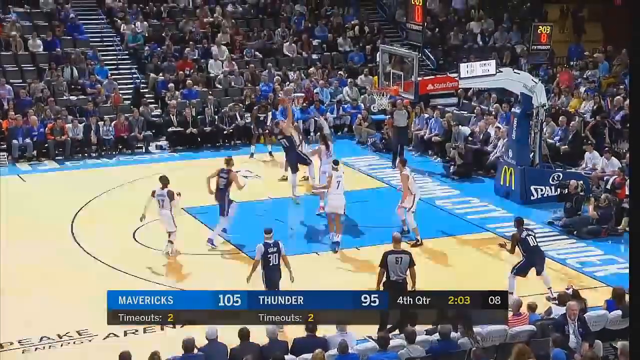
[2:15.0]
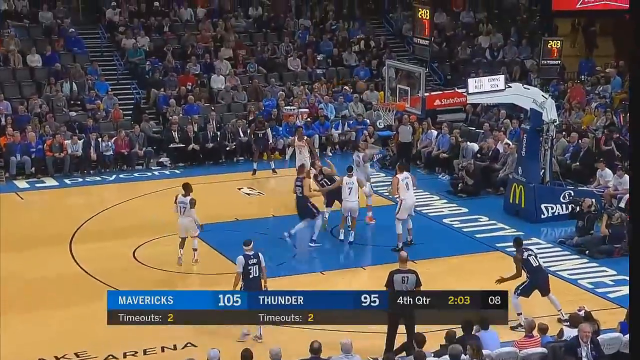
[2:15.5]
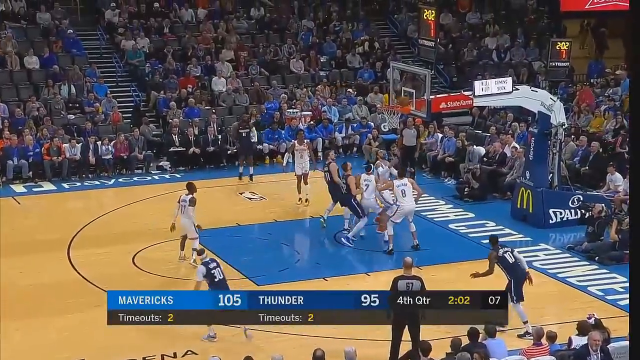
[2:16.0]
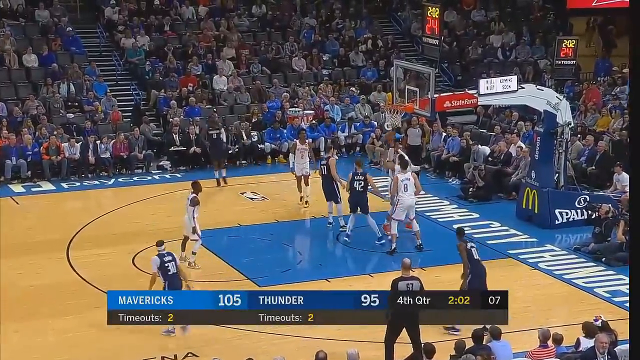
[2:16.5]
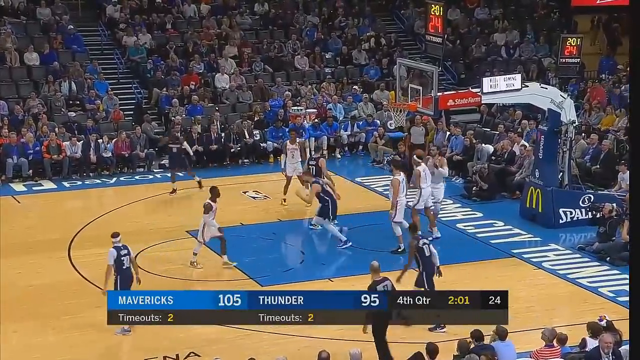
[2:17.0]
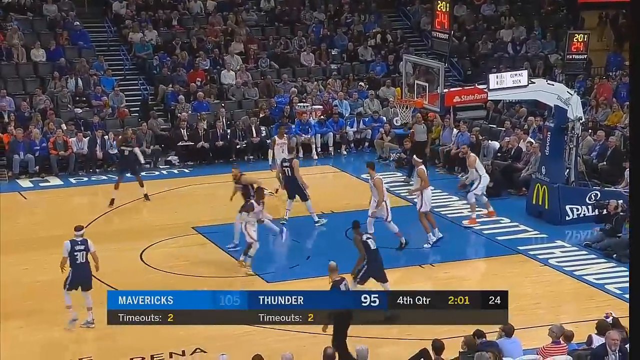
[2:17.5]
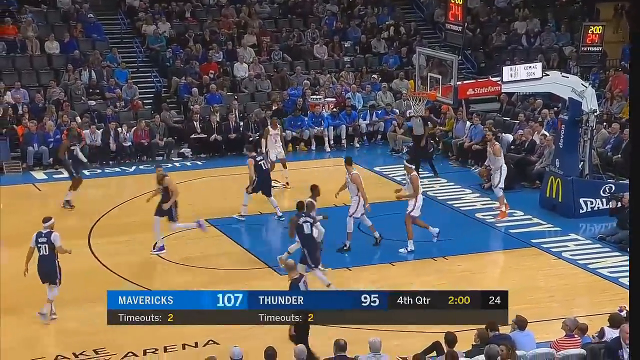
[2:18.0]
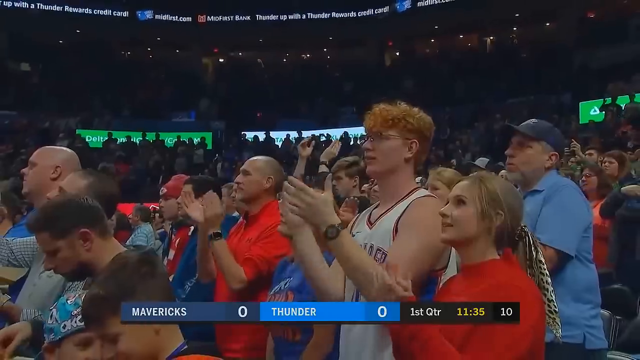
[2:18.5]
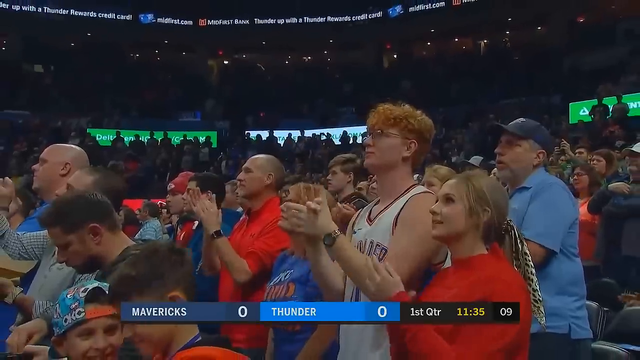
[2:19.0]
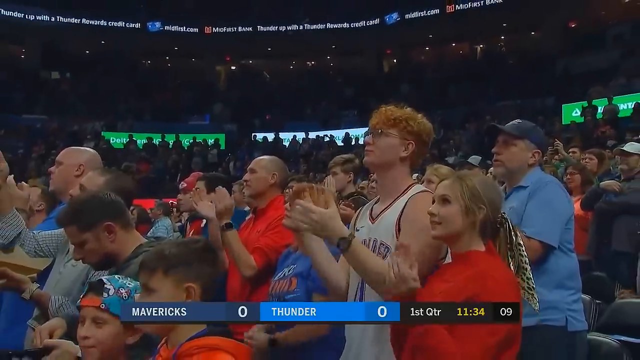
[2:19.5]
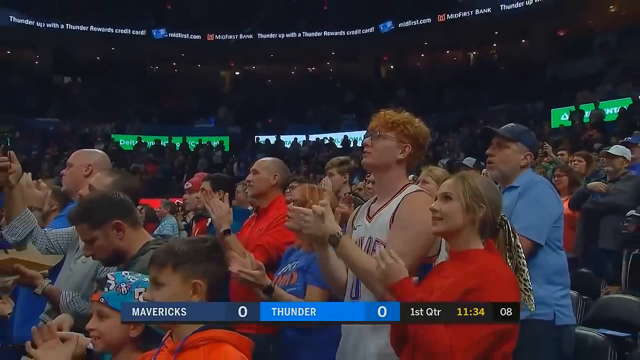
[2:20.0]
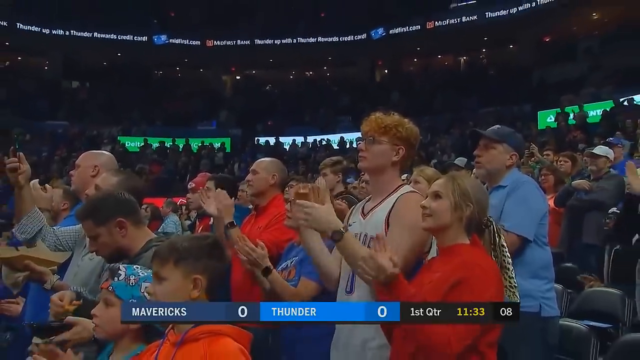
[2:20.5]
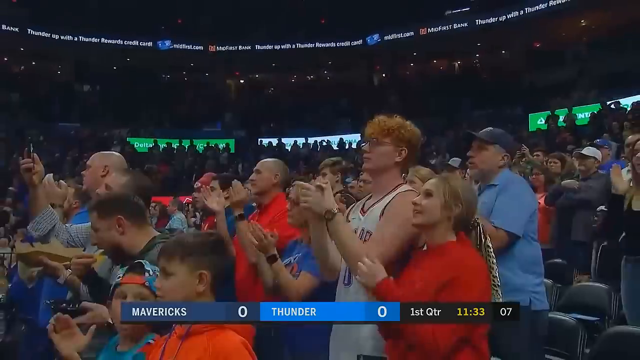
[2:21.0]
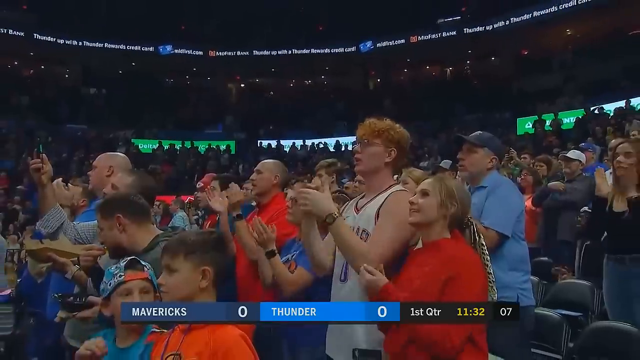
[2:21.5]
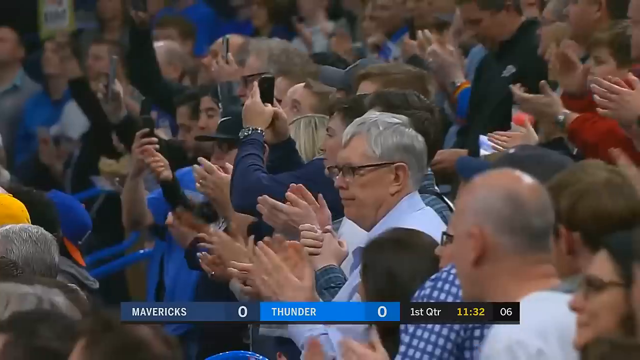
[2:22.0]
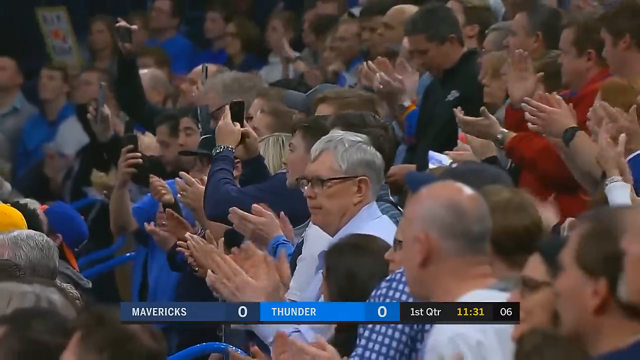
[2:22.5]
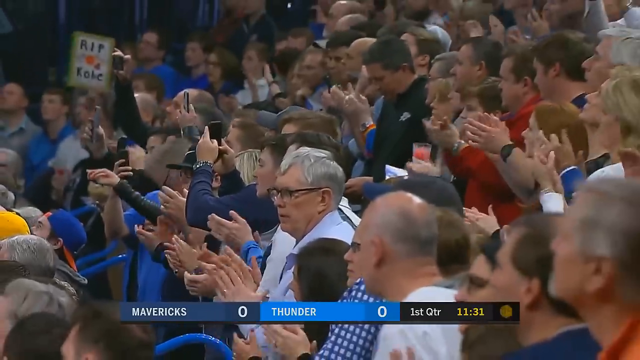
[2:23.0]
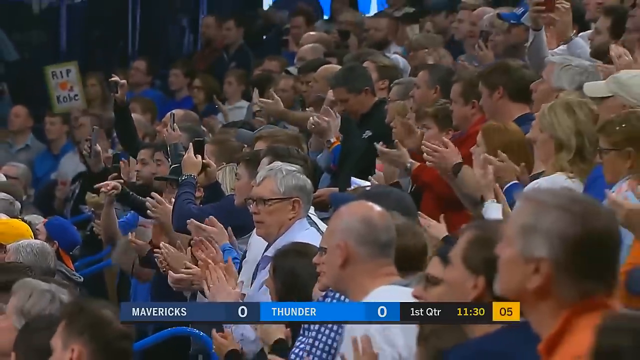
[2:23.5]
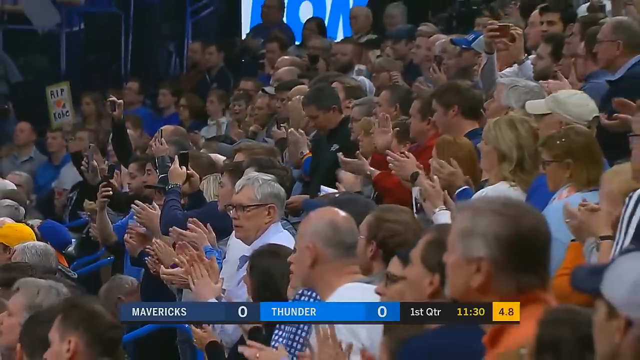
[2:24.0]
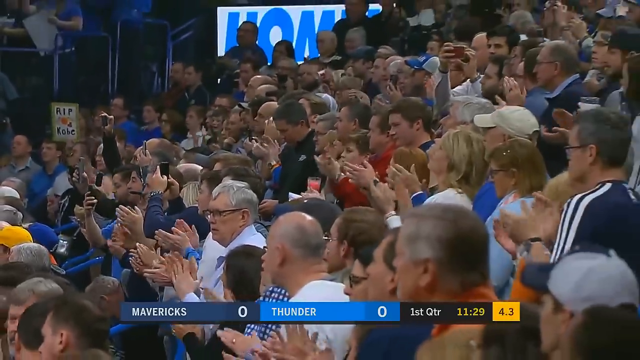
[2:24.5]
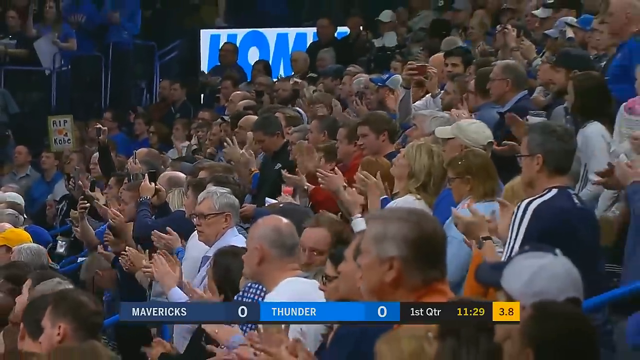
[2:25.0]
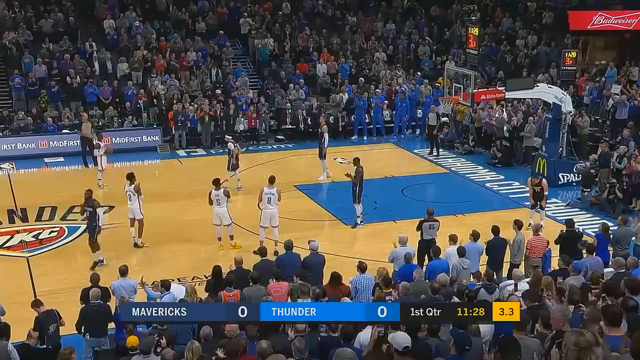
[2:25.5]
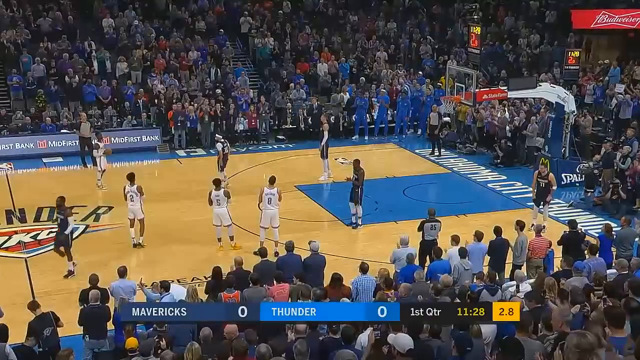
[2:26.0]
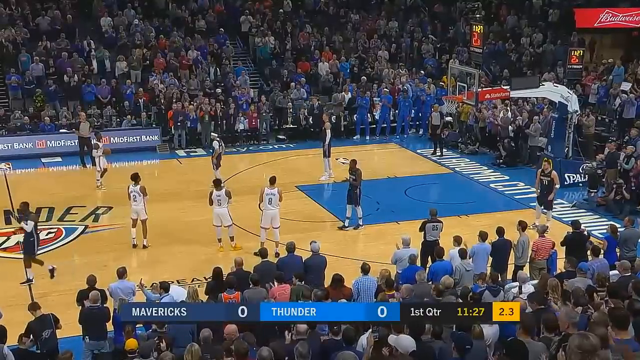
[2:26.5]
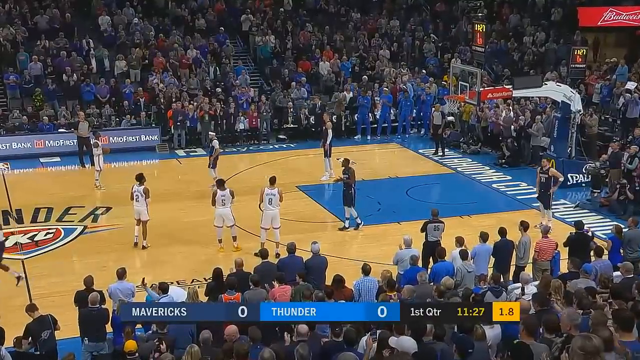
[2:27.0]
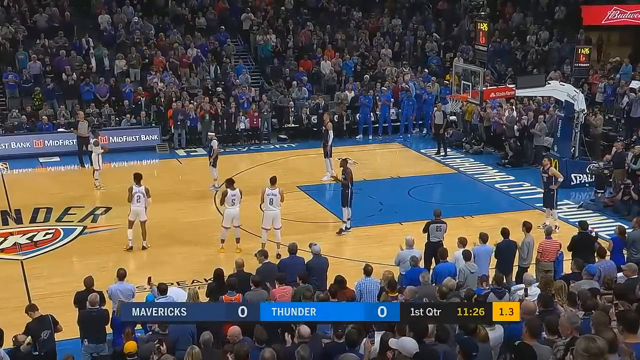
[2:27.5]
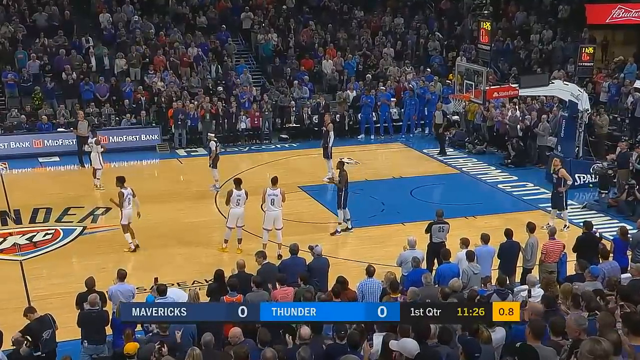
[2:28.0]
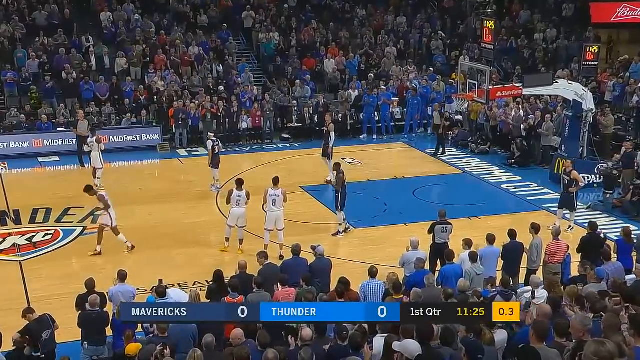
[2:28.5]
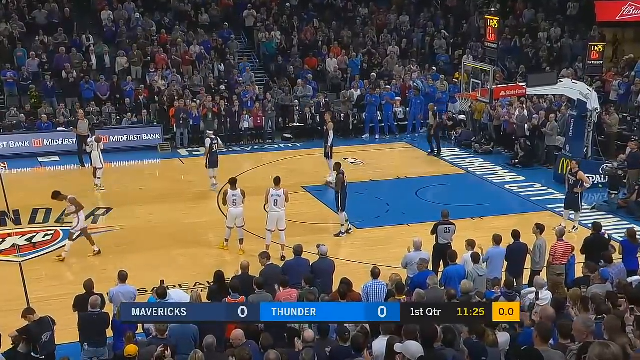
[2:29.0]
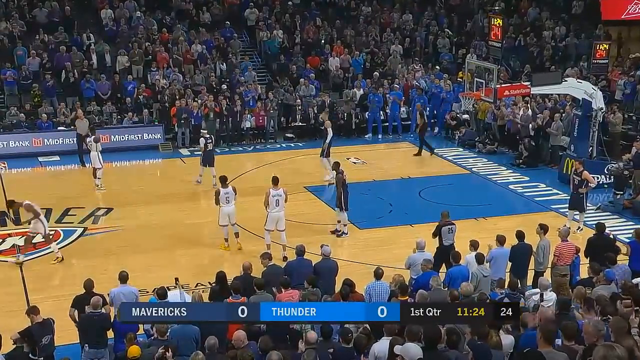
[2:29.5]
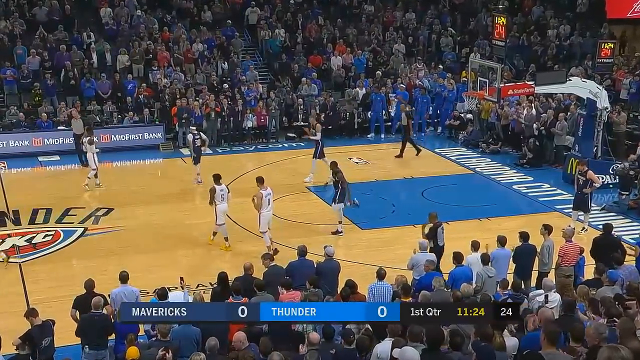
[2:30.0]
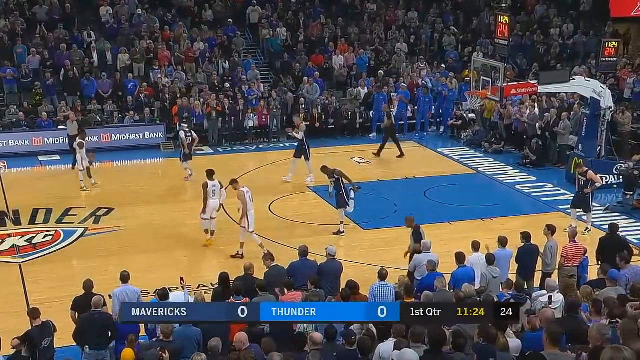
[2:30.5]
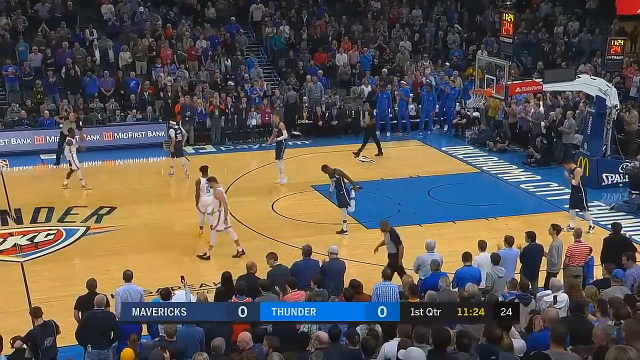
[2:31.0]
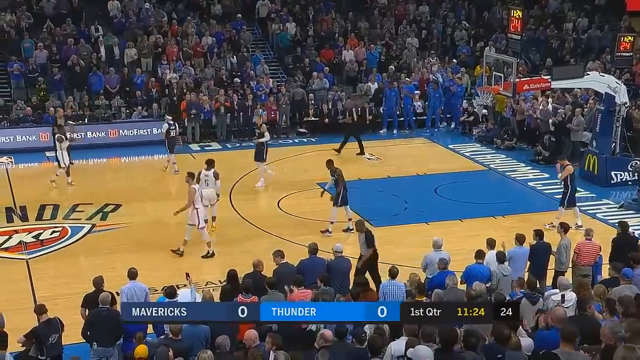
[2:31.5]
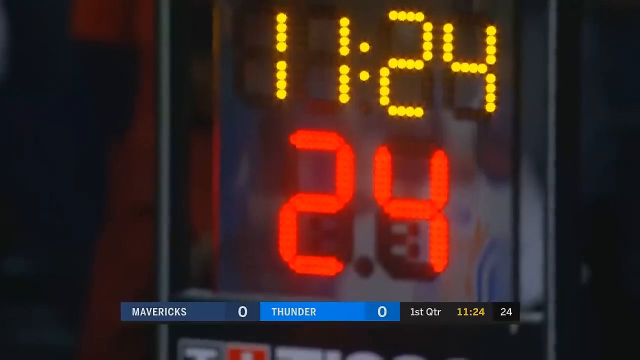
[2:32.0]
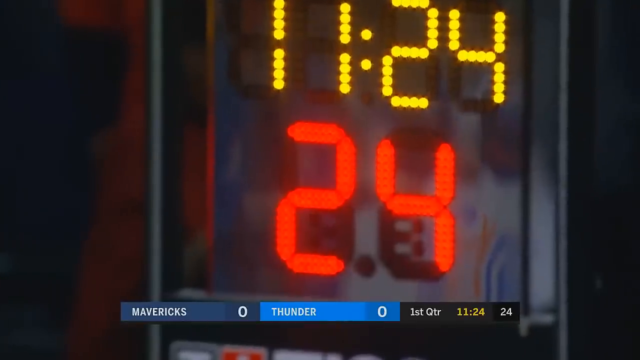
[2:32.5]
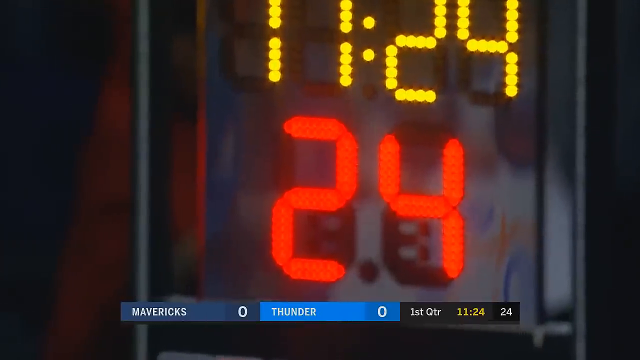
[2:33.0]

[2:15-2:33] Dallas continues to score more points, and then the video goes back to the beginning of the game, where the crowd is standing and clapping, apparently waiting for the first basket from the Oklahoma City Thunder. Far more people are standing at the beginning of the game than toward the end in the fourth quarter, when many empty seats were clearly visible. At the beginning the crowd seems quite large; the score is 0-0 in the first quarter with 11:24 left, and no baskets have been scored yet. The video then jumps ahead to the fourth quarter with two minutes left and a score of 107 to 95 in favor of the Dallas Mavericks.